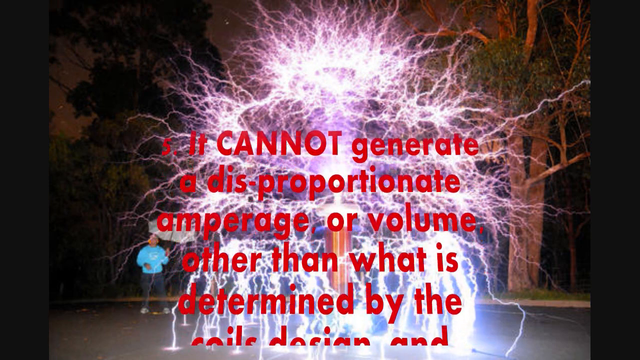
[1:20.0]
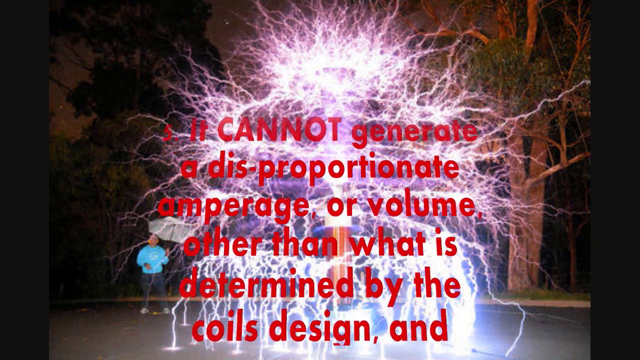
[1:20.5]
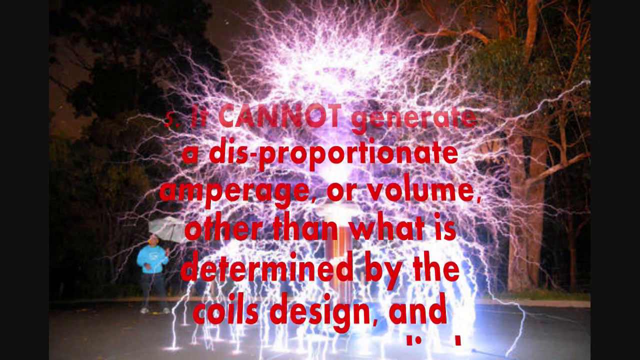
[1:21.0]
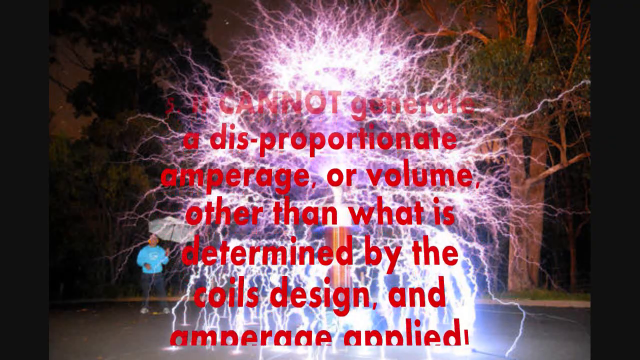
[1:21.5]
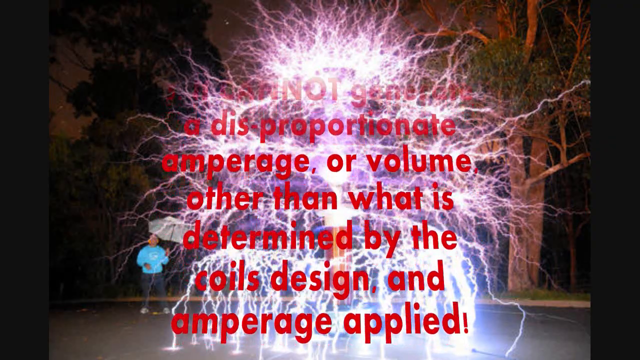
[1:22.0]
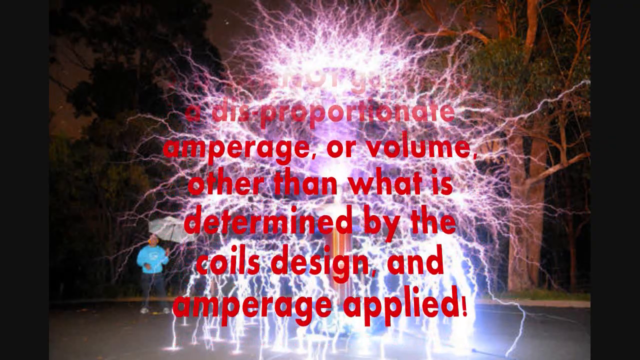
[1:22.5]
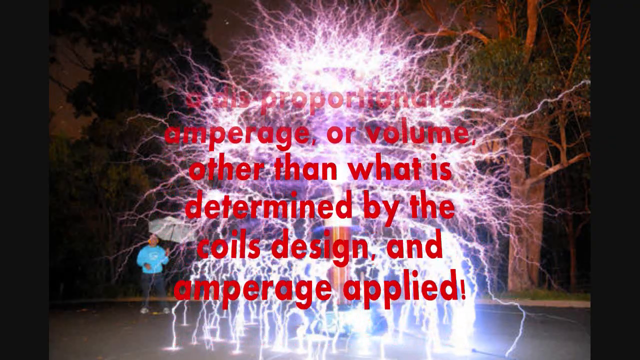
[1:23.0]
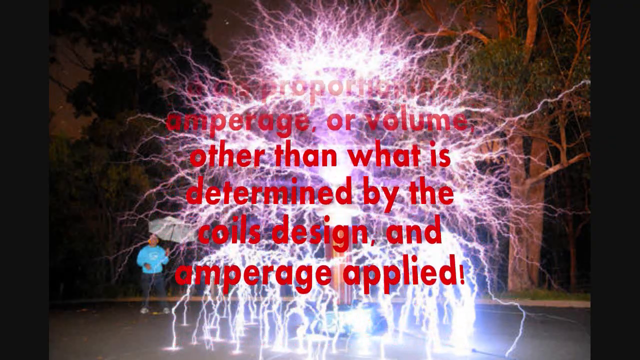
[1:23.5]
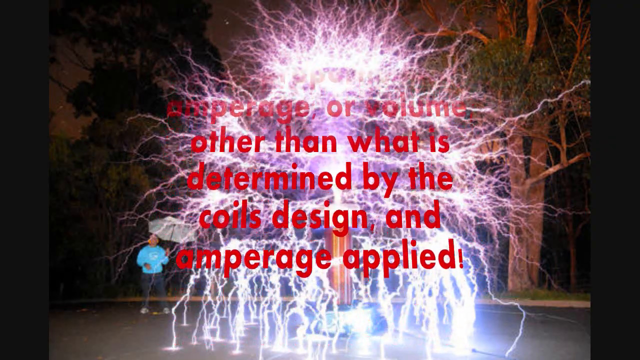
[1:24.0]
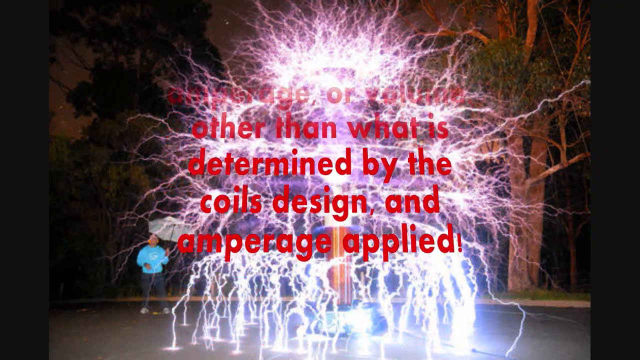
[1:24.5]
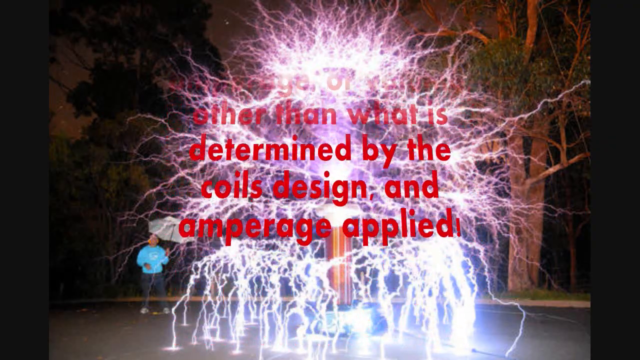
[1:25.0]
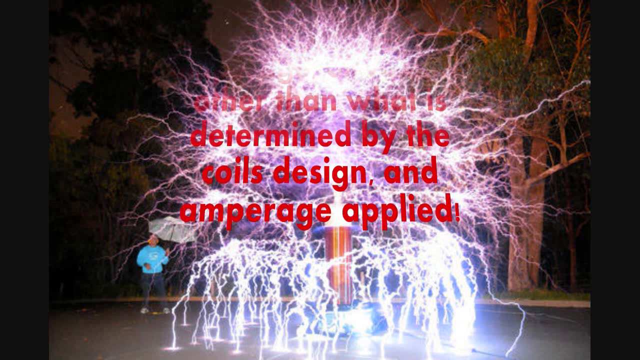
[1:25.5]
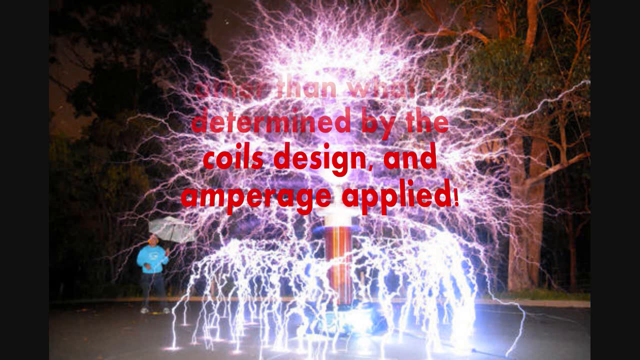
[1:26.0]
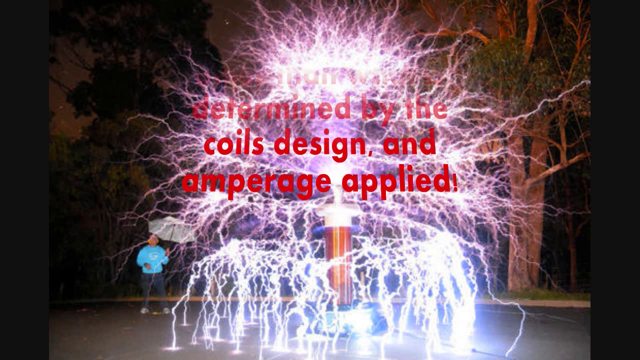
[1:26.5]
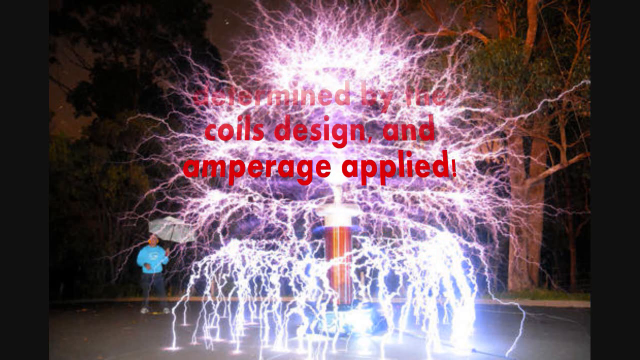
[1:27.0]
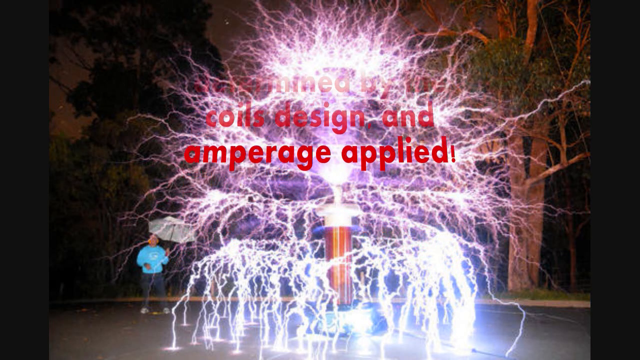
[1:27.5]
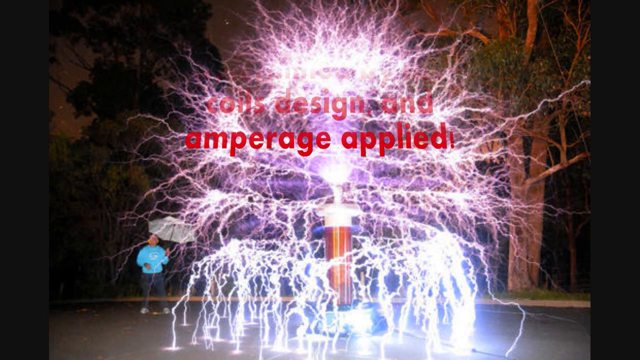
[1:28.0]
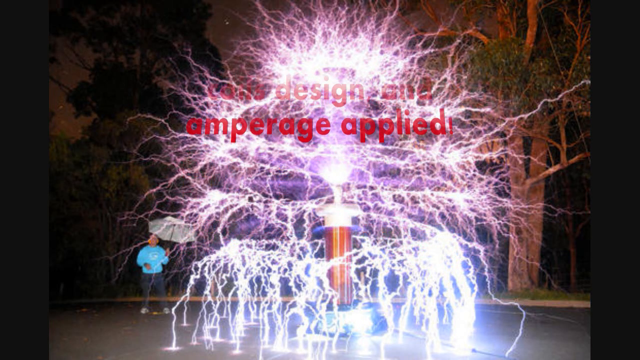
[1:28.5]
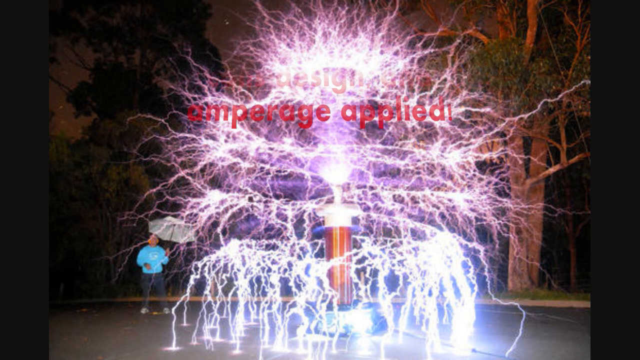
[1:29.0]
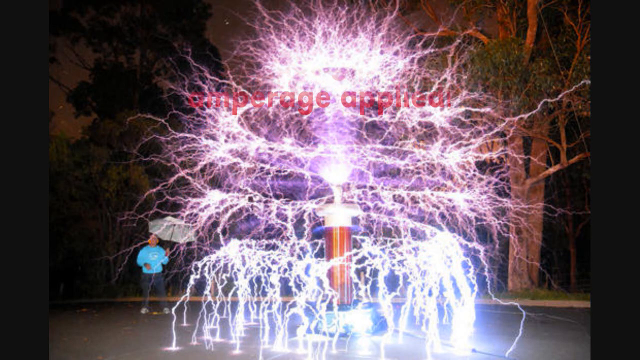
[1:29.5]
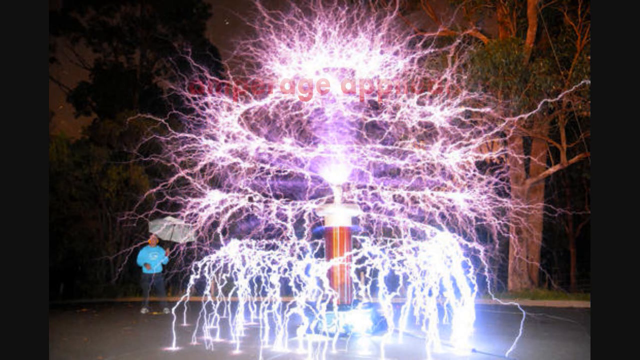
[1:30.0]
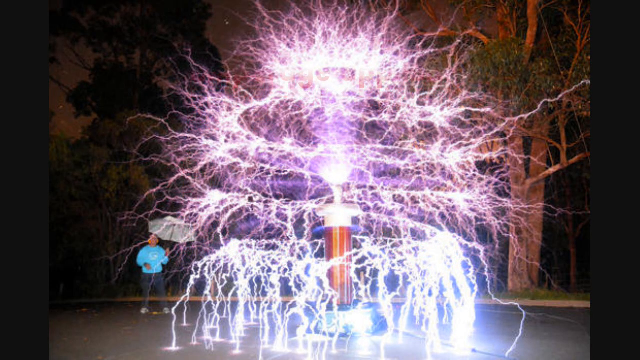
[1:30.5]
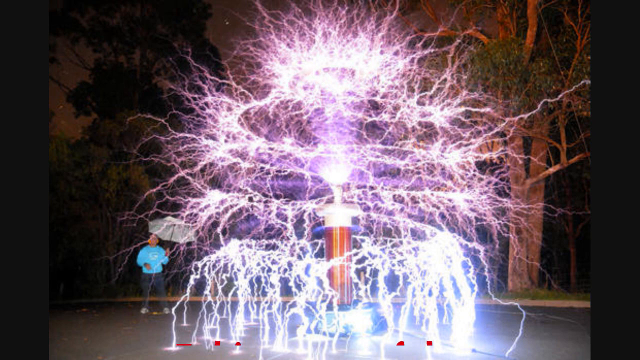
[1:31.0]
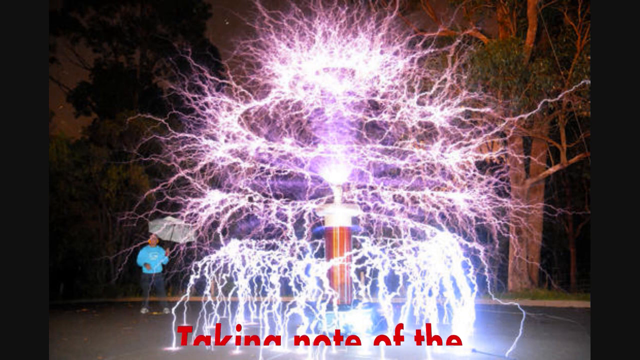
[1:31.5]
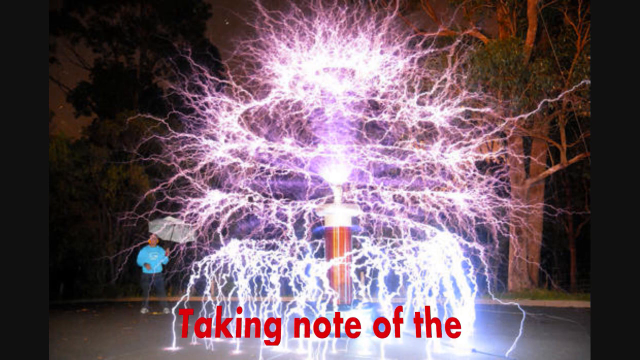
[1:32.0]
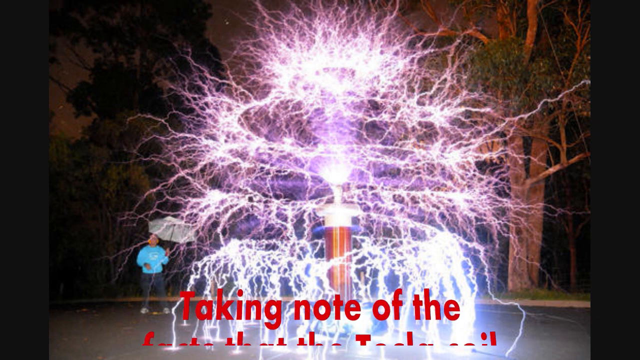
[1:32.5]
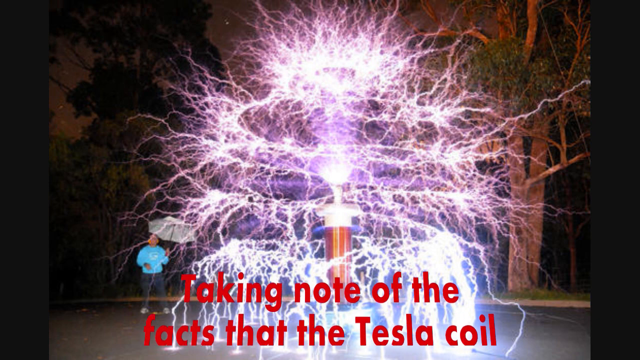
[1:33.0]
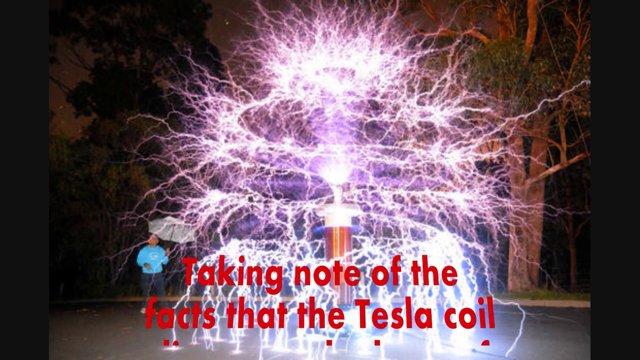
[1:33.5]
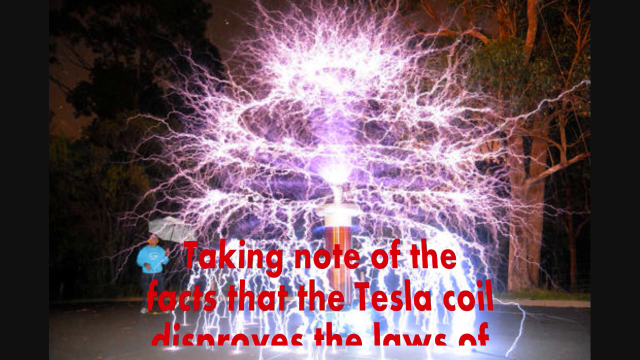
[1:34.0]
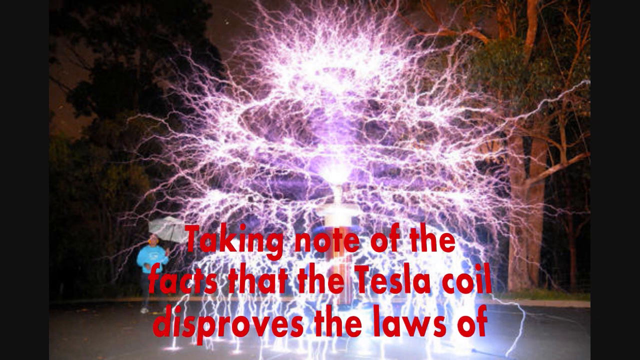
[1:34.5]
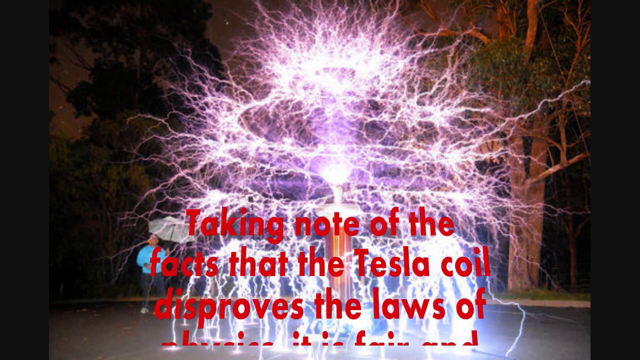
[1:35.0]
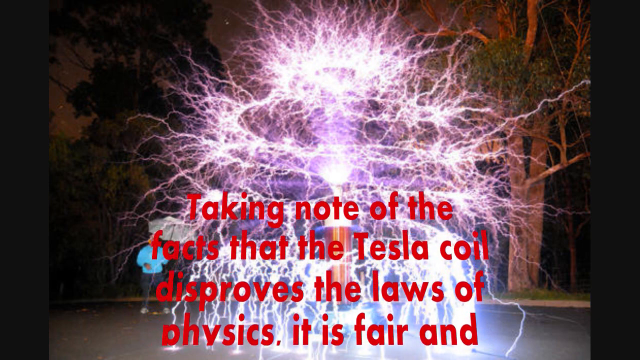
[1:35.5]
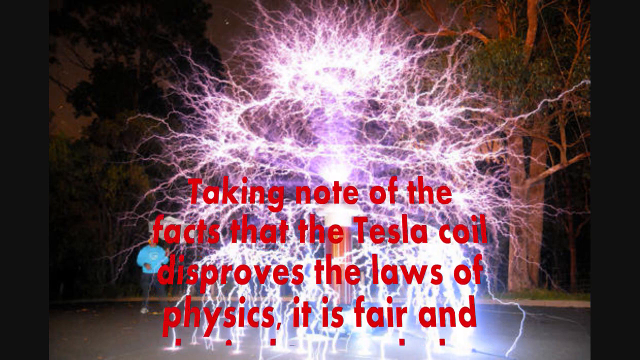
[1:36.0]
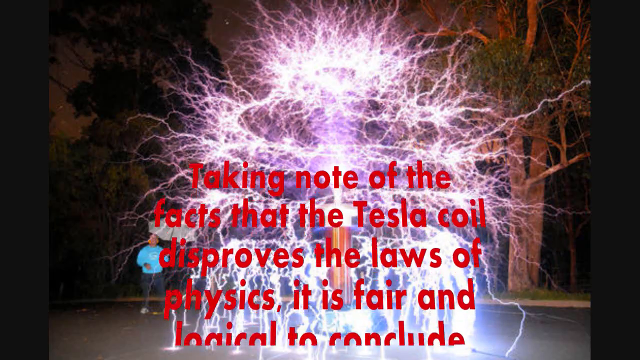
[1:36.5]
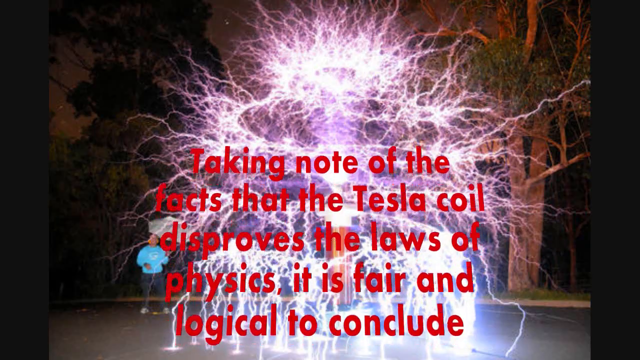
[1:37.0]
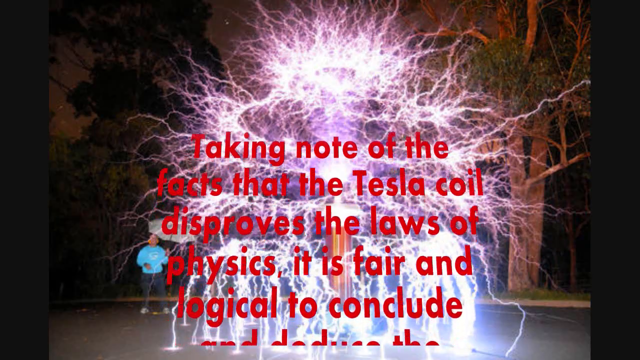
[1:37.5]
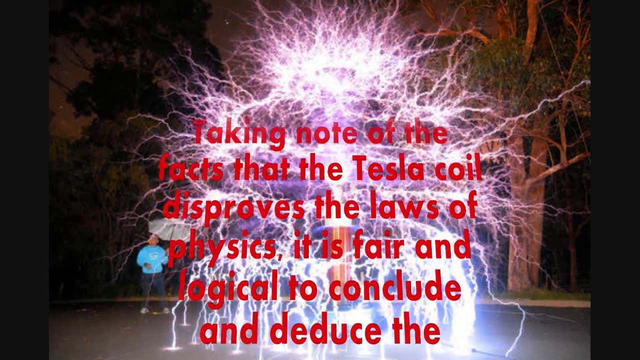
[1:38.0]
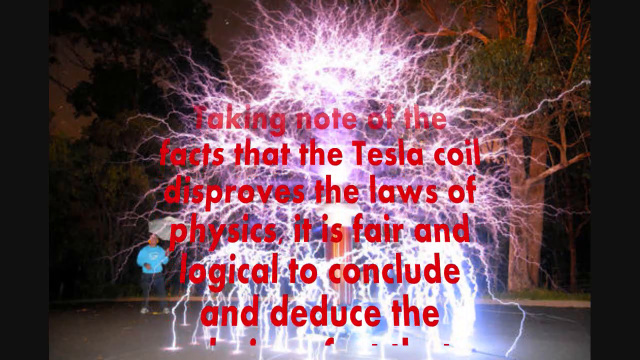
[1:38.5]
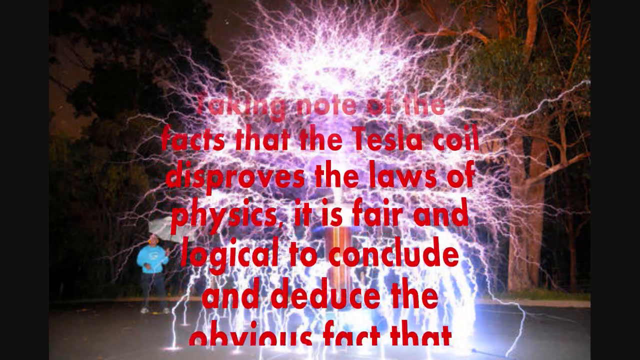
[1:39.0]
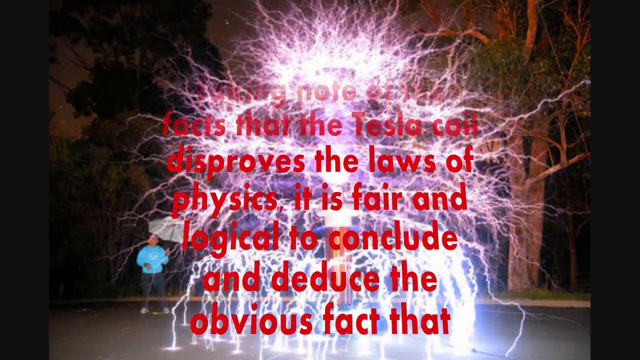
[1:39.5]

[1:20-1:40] The view remains on the Tesla coil discharging outdoors at night, watched by the man holding an umbrella and wearing a sky blue sweatshirt. The text about the amperage applied scrolls away to the top of the page, and another paragraph appears, stating "taking note of the fact that the Tesla coil disproves the laws of physics, it is fair and logical to conclude and deduce the obvious fact that..."